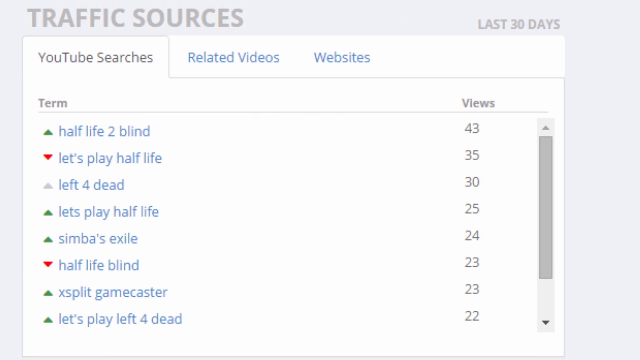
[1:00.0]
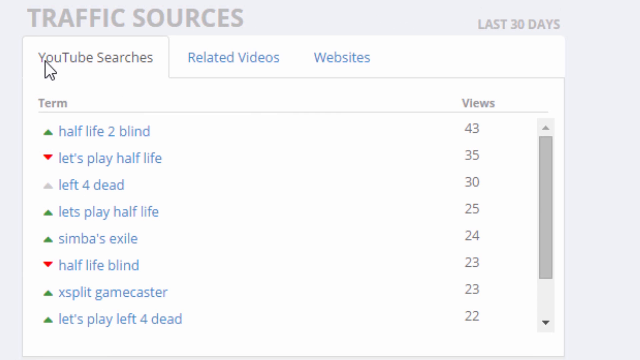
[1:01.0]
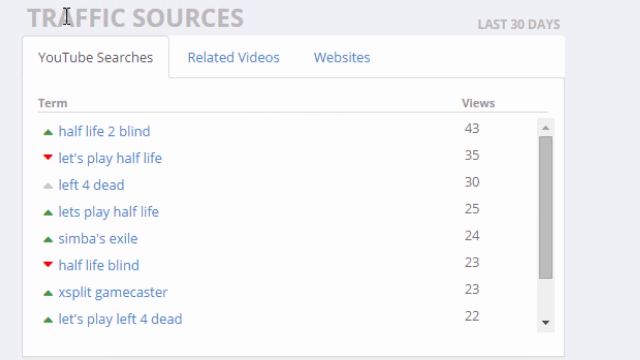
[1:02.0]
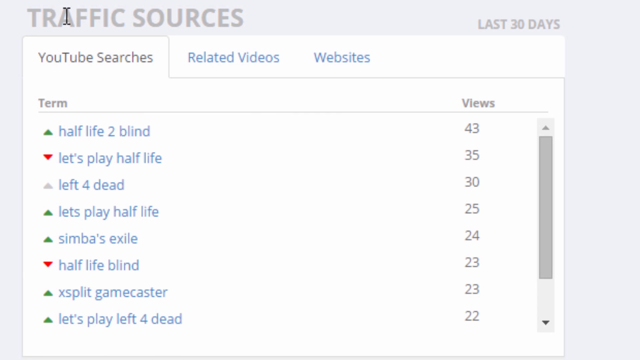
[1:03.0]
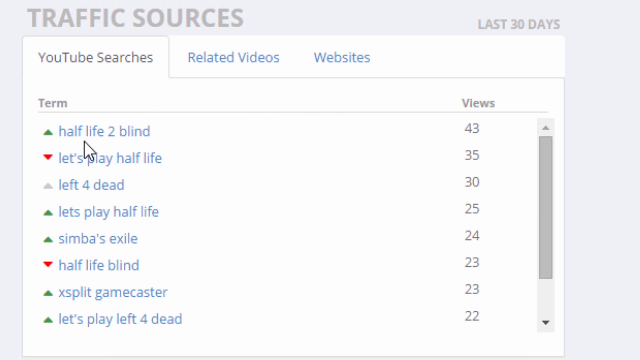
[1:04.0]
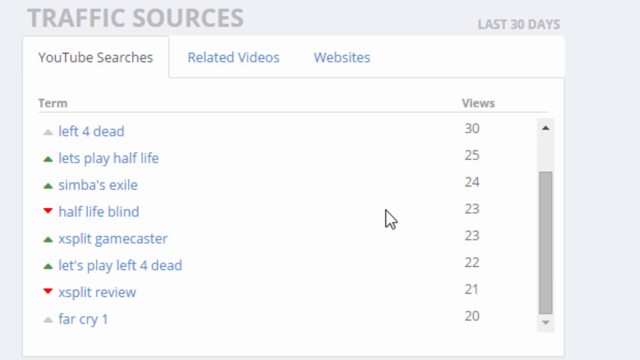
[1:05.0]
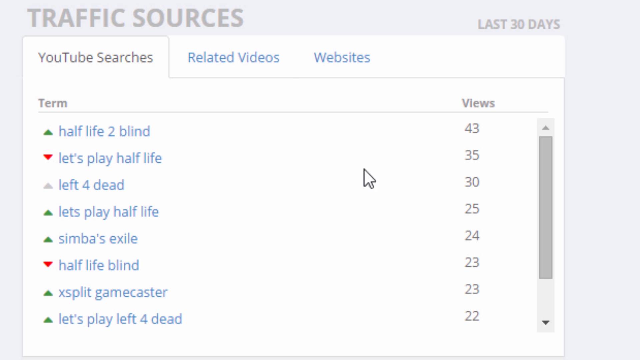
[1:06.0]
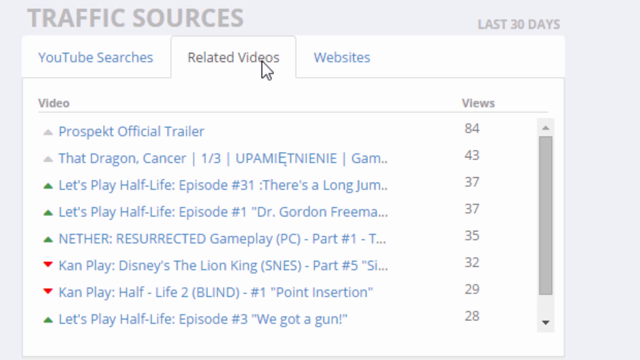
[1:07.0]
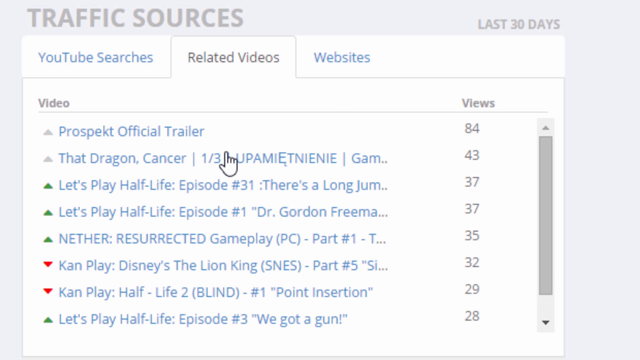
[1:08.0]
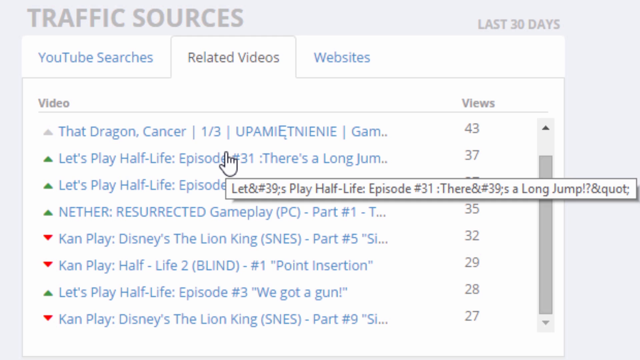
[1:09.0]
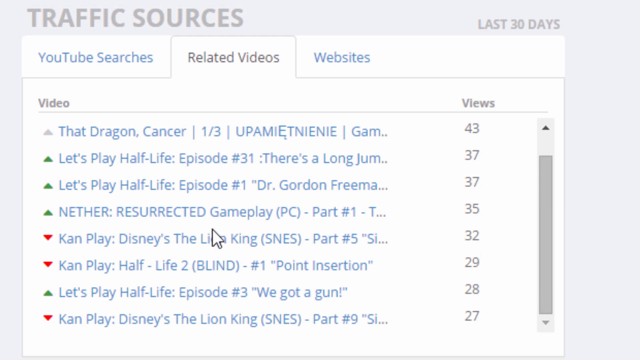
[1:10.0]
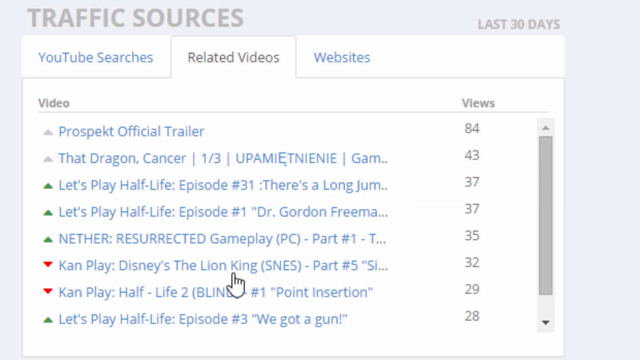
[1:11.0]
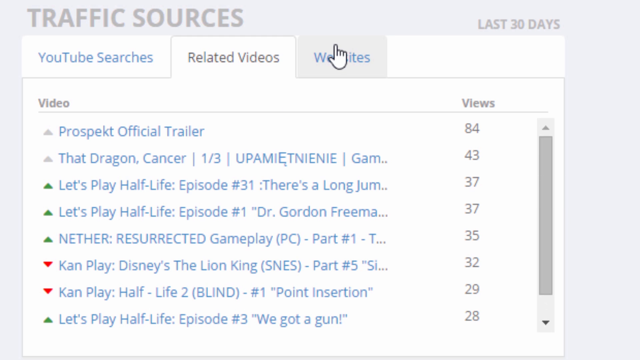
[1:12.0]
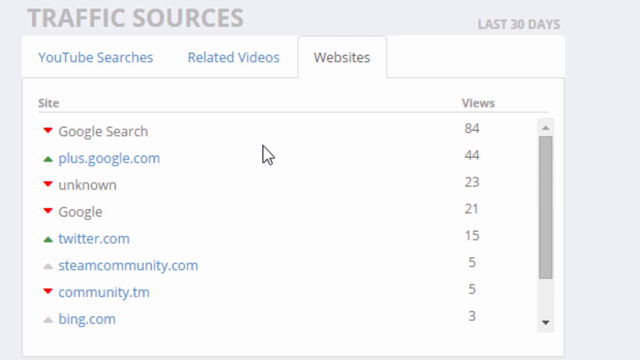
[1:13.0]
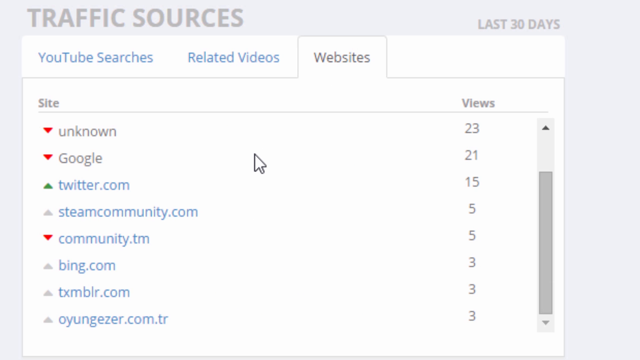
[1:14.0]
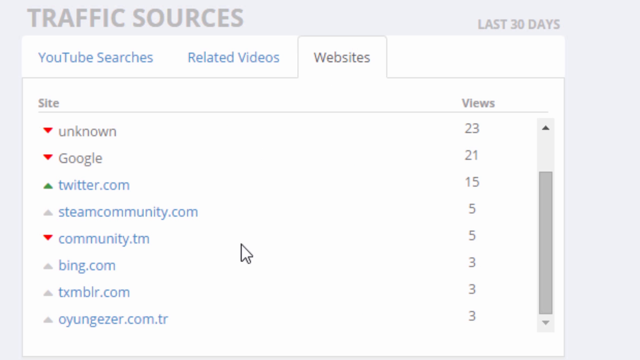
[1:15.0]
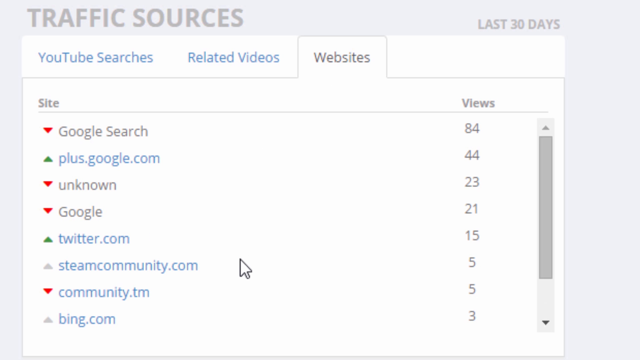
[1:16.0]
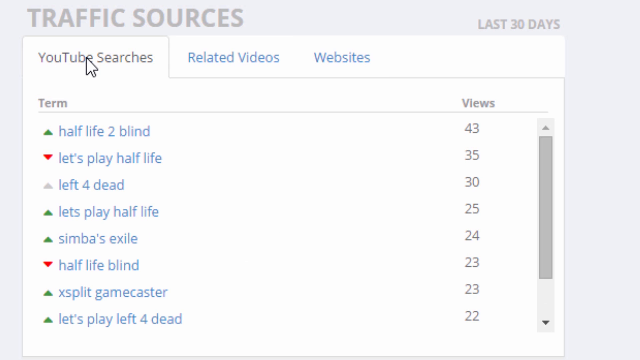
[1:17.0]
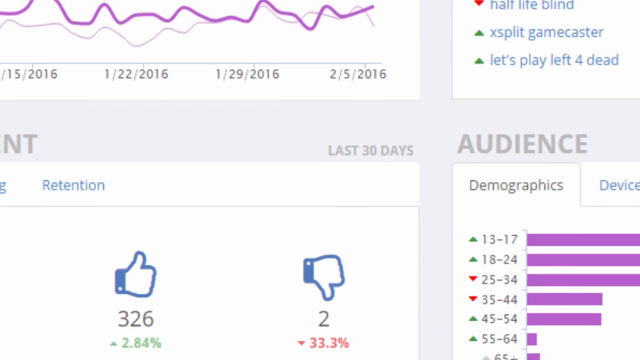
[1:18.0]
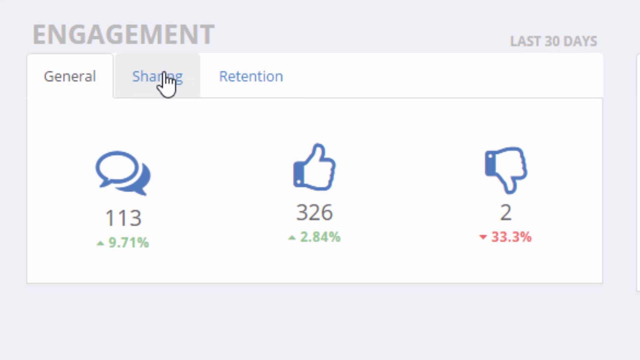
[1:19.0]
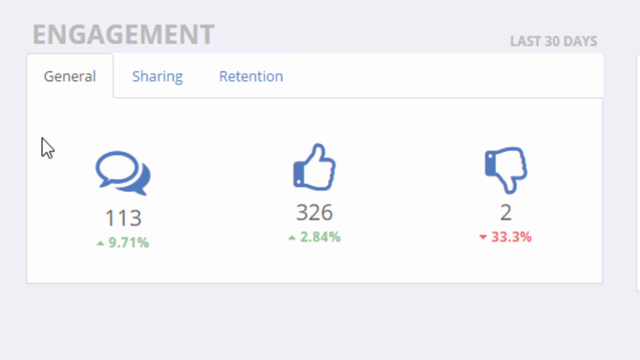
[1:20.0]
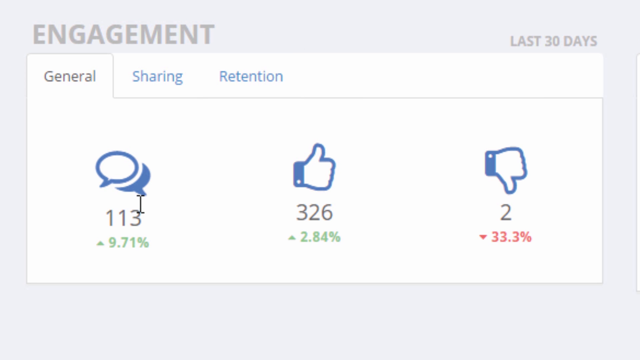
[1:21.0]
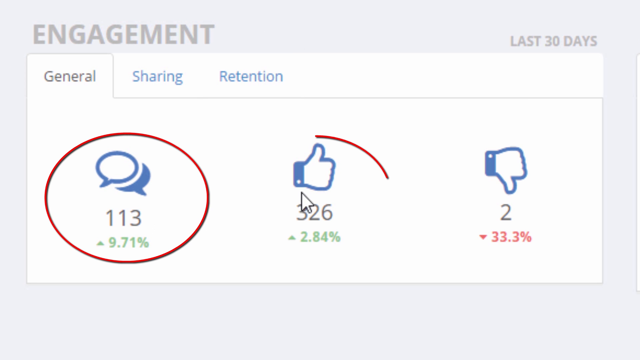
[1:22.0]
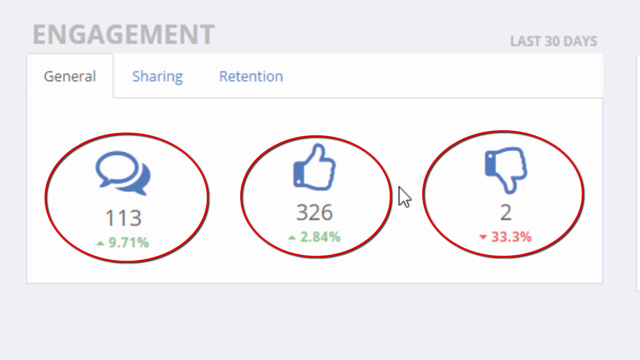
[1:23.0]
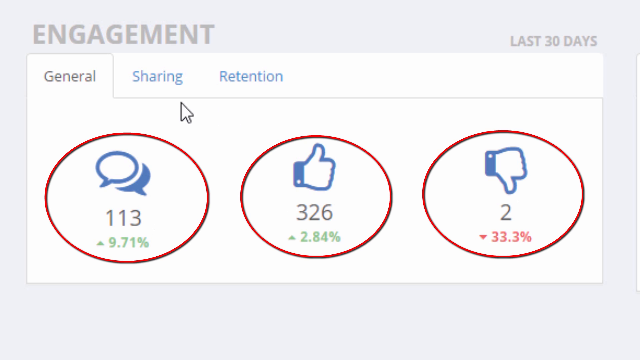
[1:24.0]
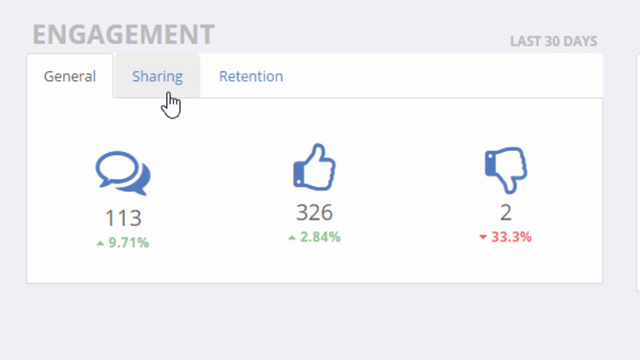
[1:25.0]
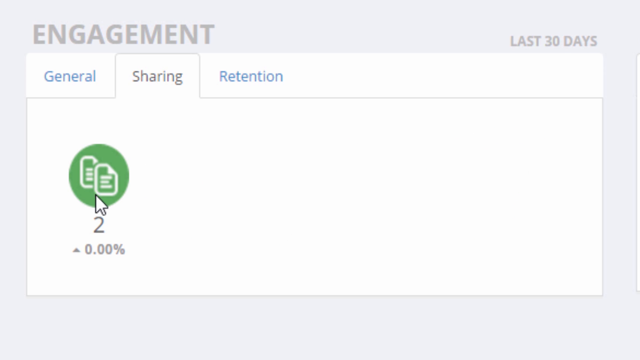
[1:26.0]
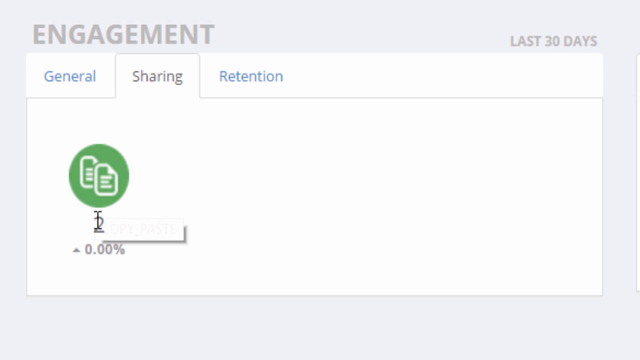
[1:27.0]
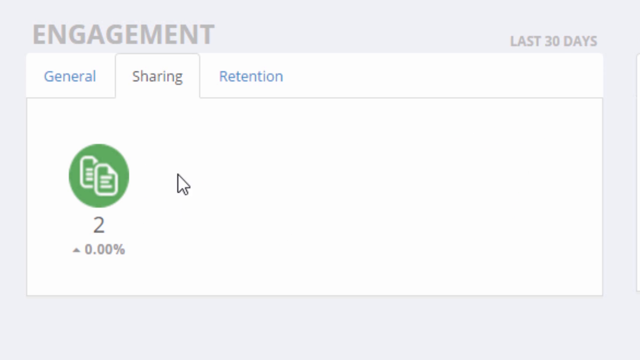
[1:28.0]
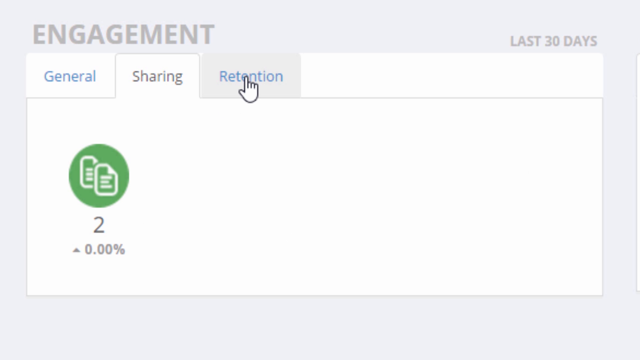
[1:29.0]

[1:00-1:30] The person focuses on traffic sources, looking at the different videos for each term and scrolling up and down. They then switch to the related videos tab, which lists videos including "let's play half-life episode 31", "let's play half-life episode 1", "Disney's the Lion King SNES part number 5", "half-life 2 blind" and "we got a gun". They then go to websites, which lists entries including "Google search", "google.com", "unknown", "twitter.com" and "bing.com". They move on to engagement, which has three tabs: "general", "sharing" and "retention". Under general are 113 comments, 326 likes (thumbs up) and 2 dislikes (thumbs down). They then go into the sharing tab, where there is a green circle with two document signs on it, along with some text.